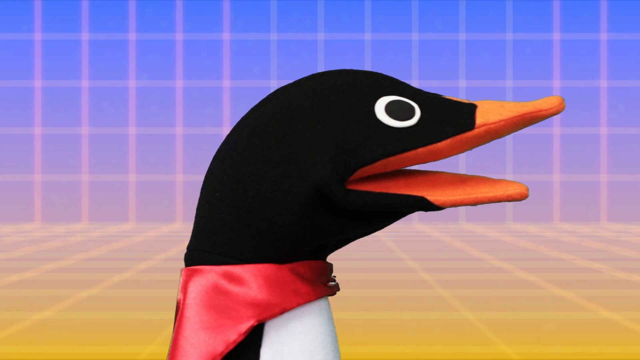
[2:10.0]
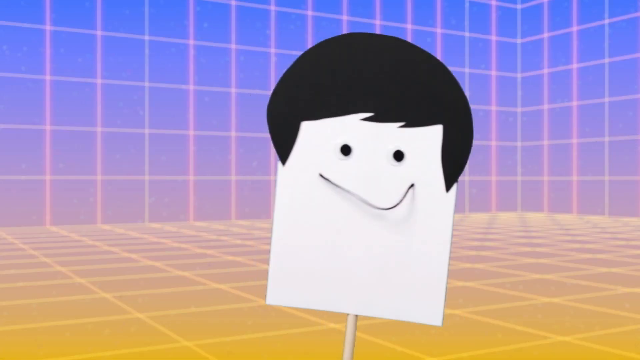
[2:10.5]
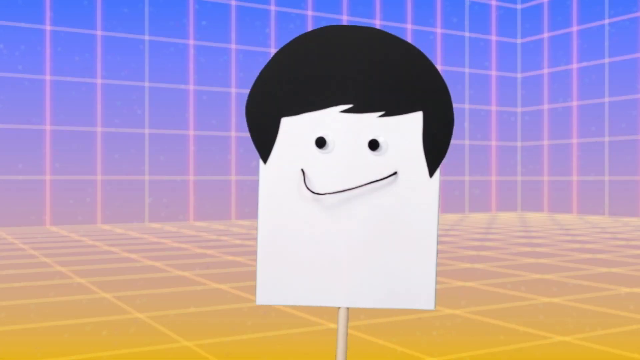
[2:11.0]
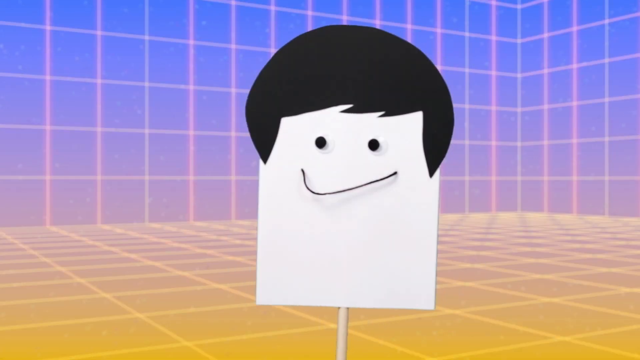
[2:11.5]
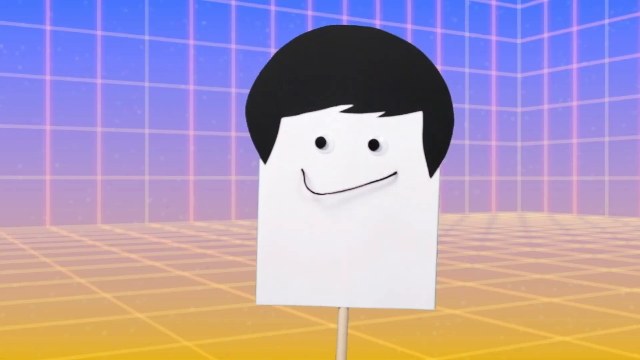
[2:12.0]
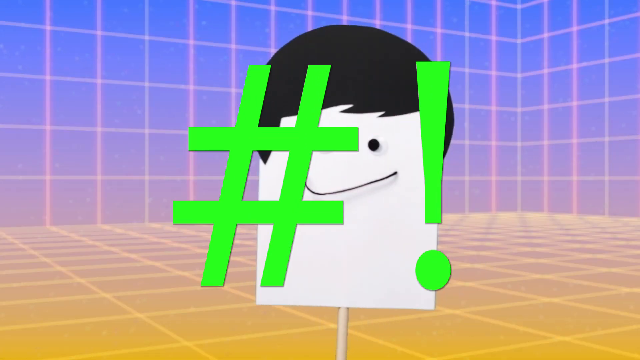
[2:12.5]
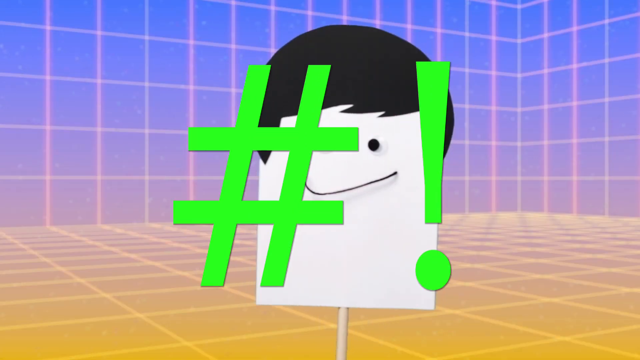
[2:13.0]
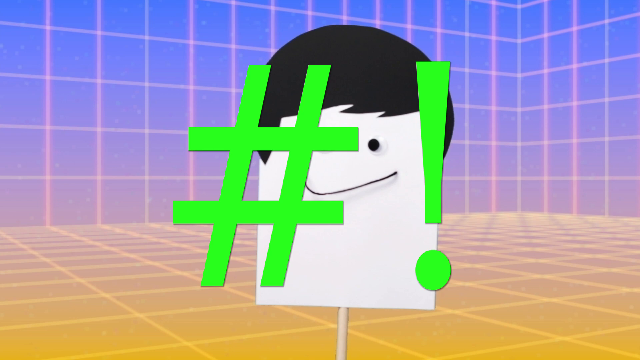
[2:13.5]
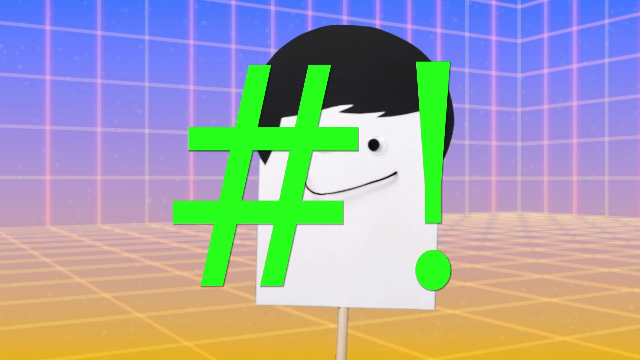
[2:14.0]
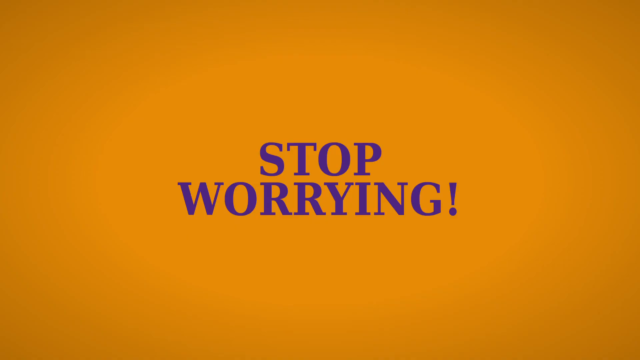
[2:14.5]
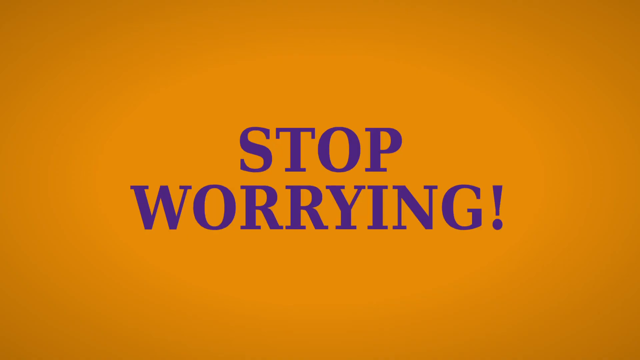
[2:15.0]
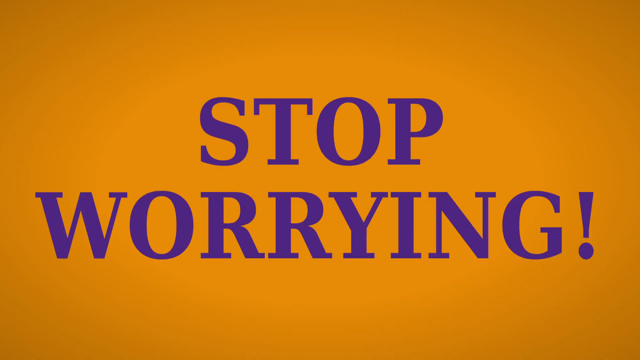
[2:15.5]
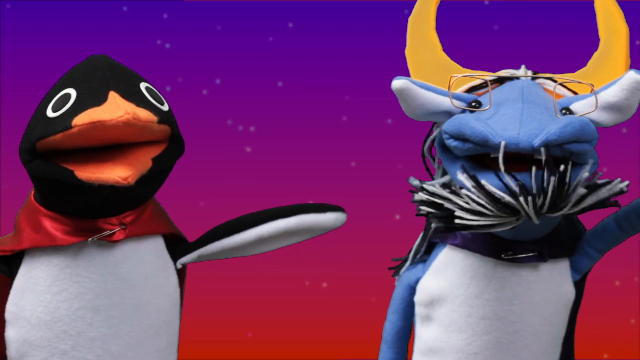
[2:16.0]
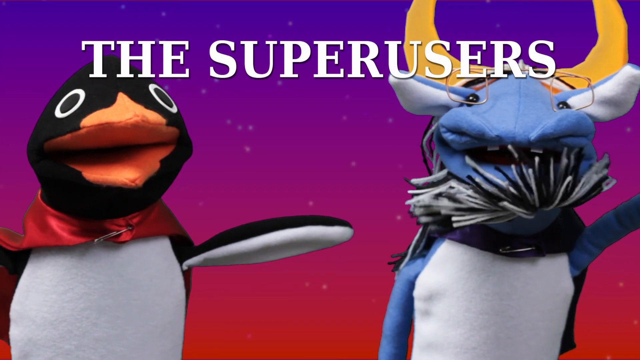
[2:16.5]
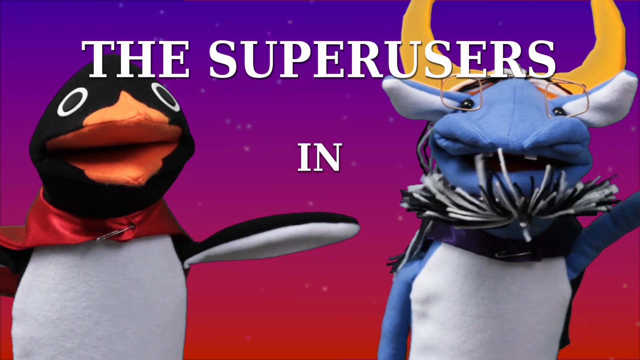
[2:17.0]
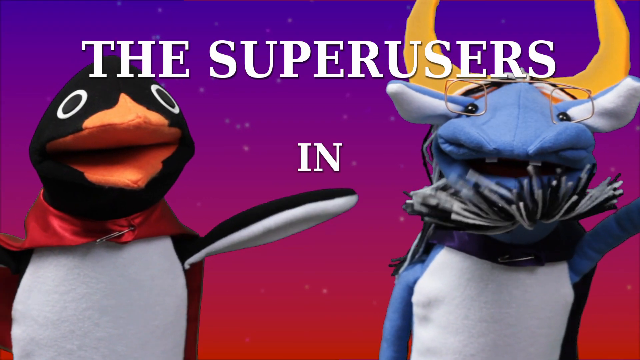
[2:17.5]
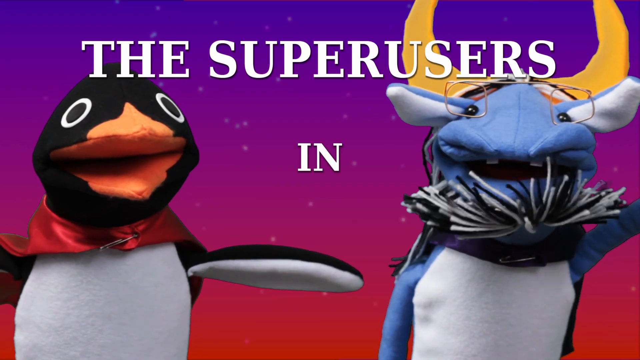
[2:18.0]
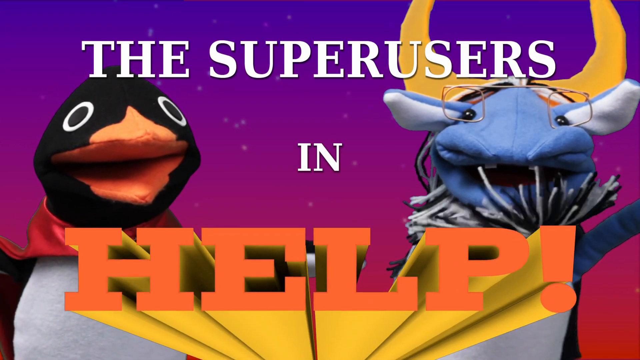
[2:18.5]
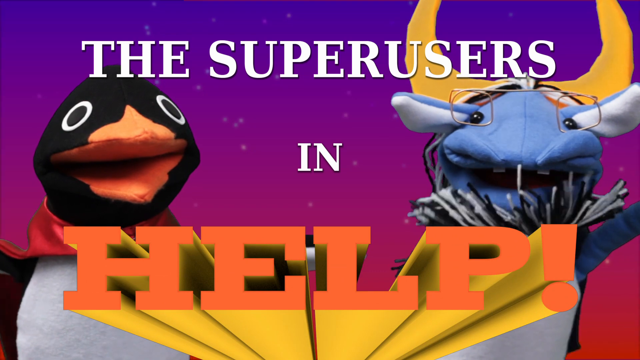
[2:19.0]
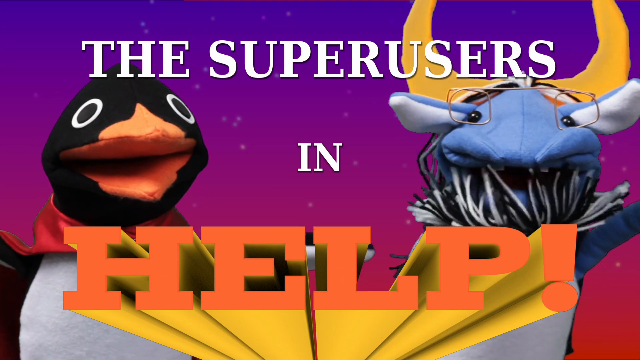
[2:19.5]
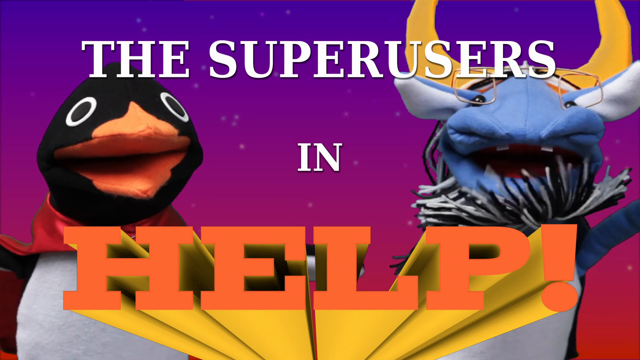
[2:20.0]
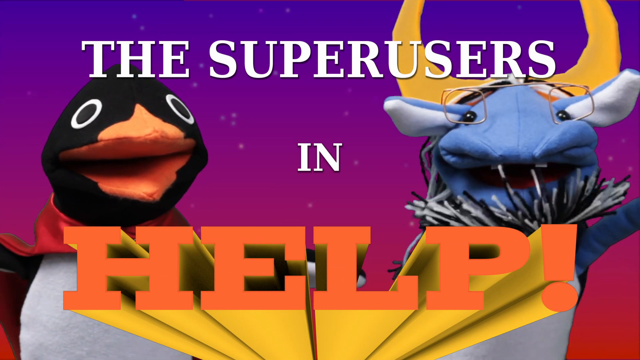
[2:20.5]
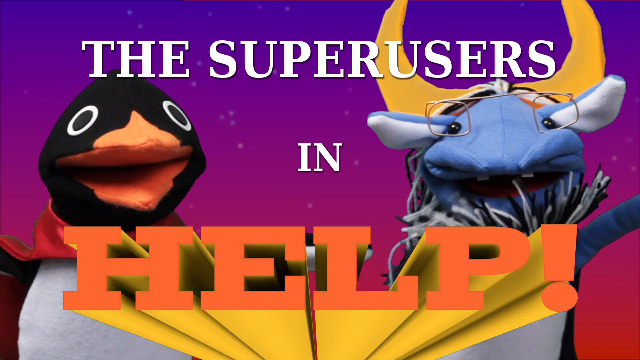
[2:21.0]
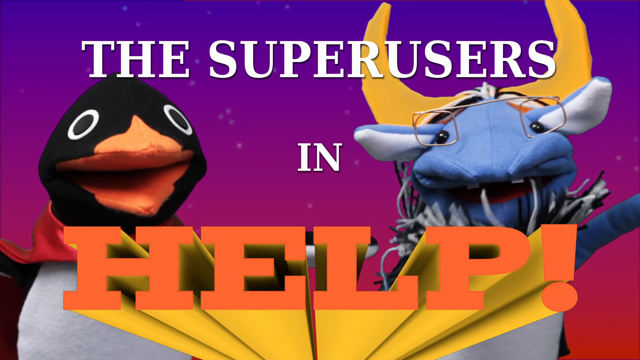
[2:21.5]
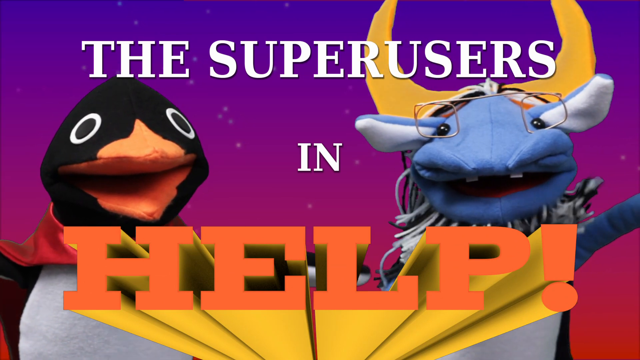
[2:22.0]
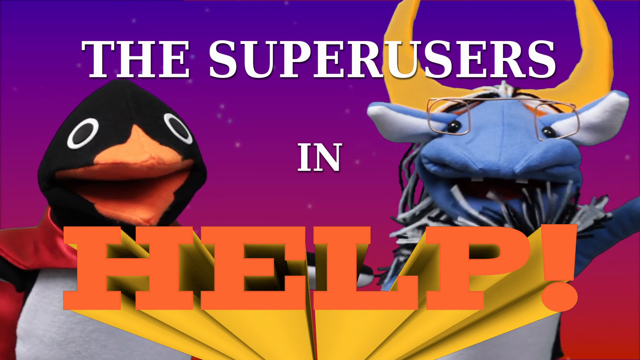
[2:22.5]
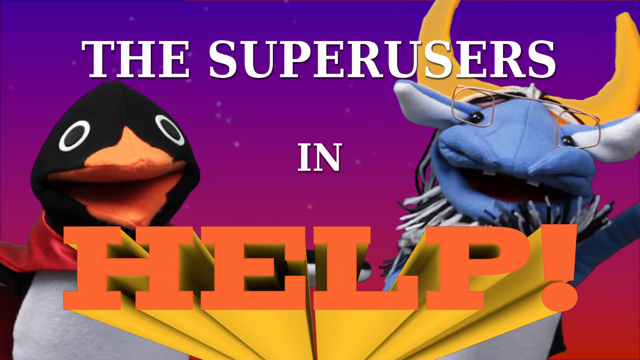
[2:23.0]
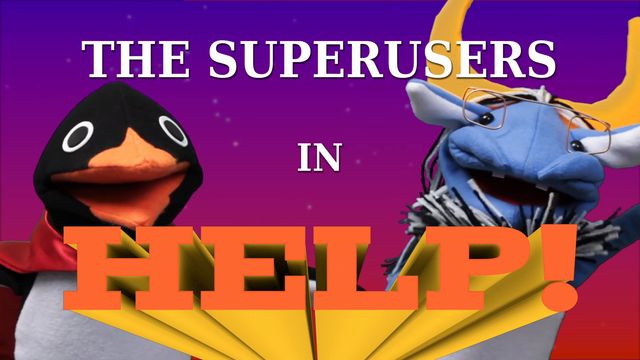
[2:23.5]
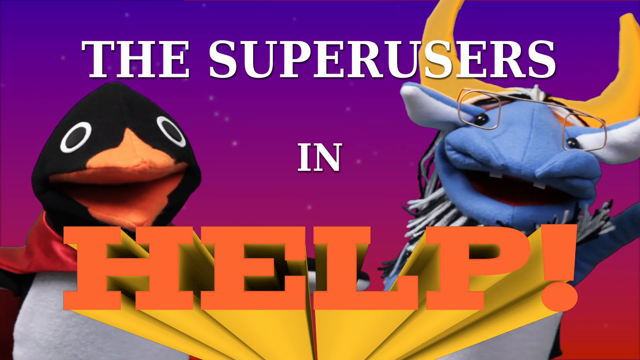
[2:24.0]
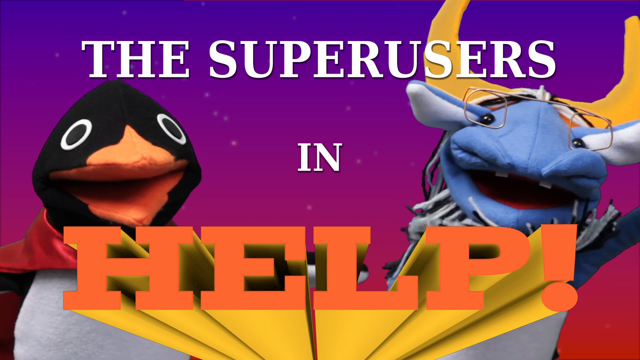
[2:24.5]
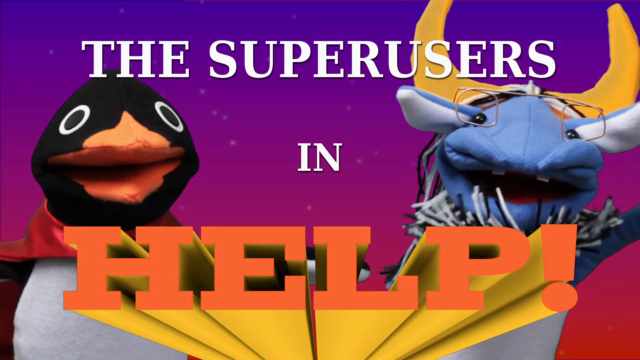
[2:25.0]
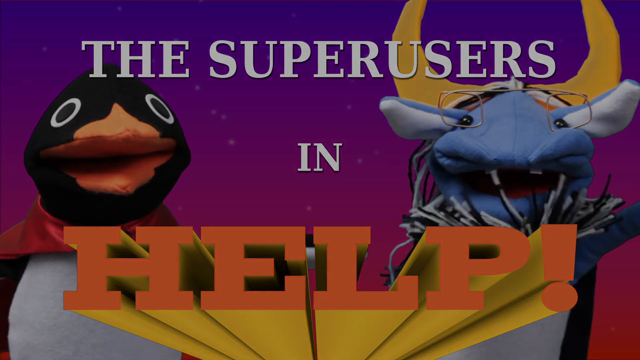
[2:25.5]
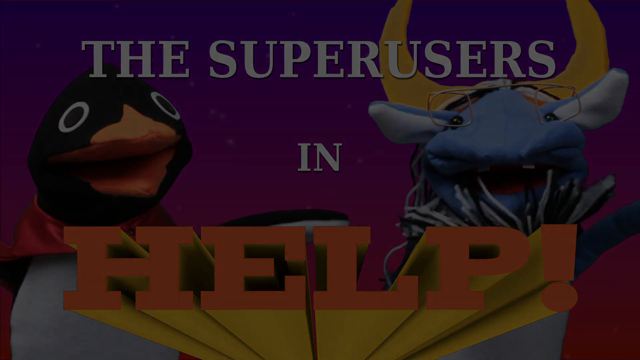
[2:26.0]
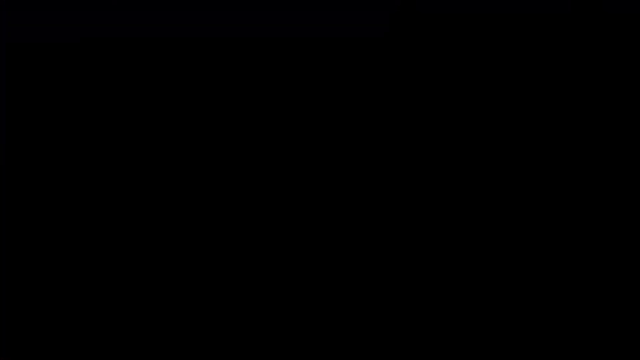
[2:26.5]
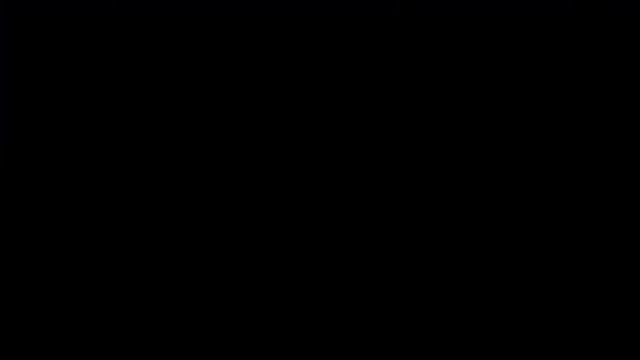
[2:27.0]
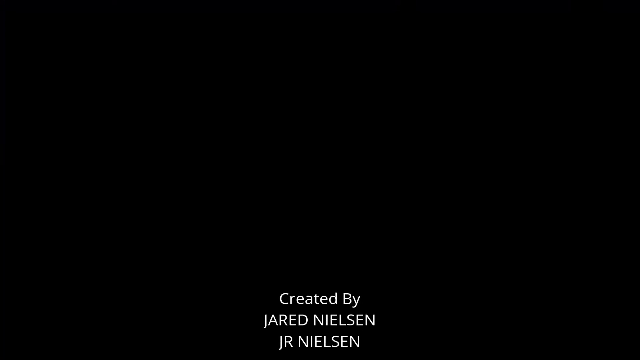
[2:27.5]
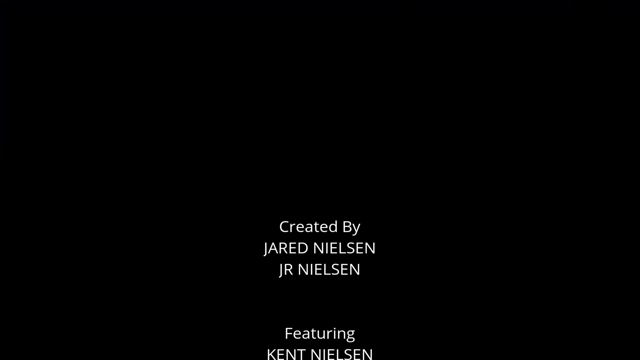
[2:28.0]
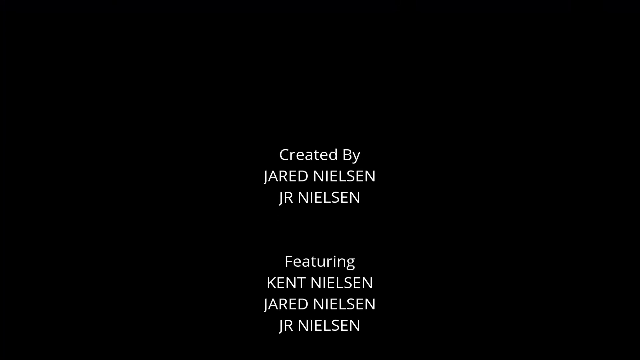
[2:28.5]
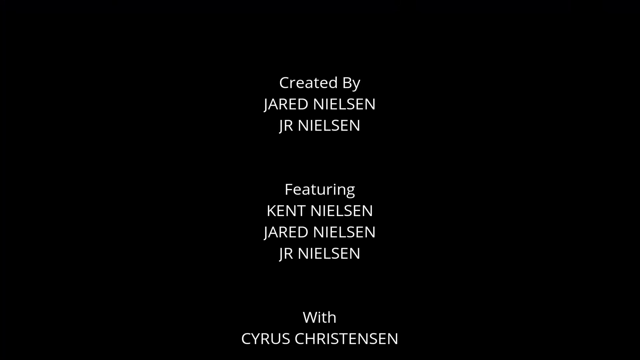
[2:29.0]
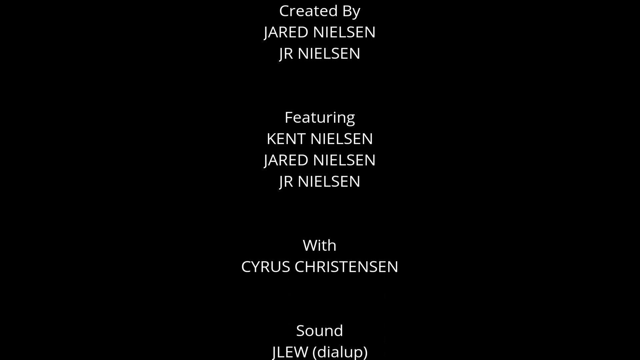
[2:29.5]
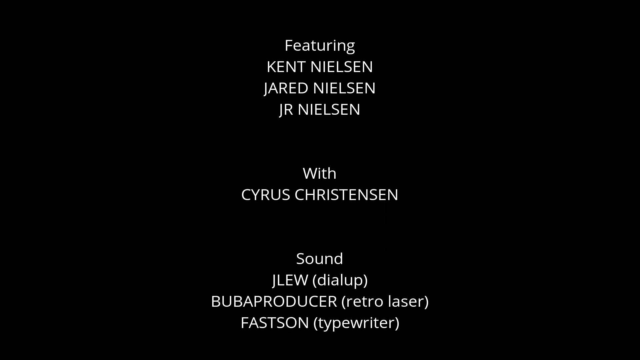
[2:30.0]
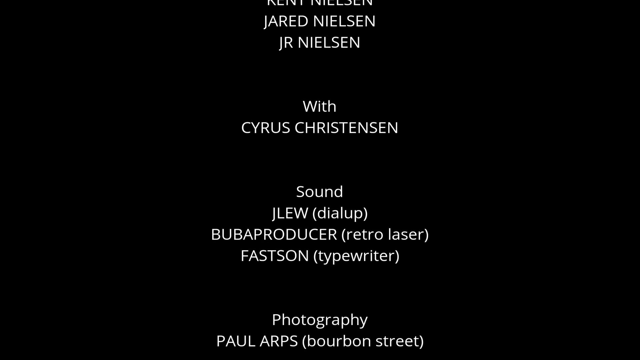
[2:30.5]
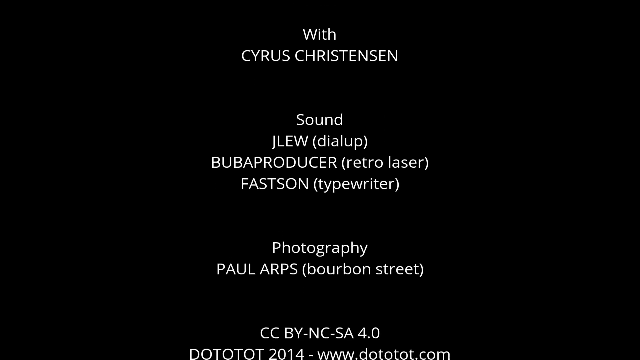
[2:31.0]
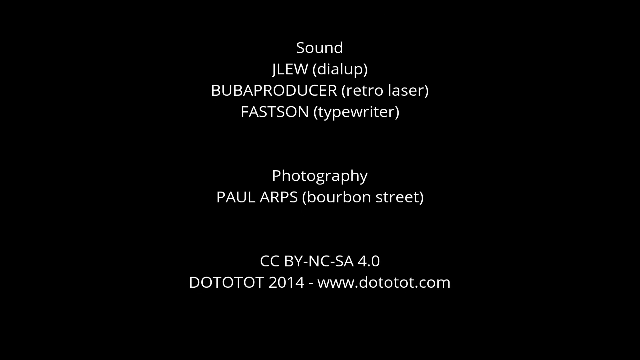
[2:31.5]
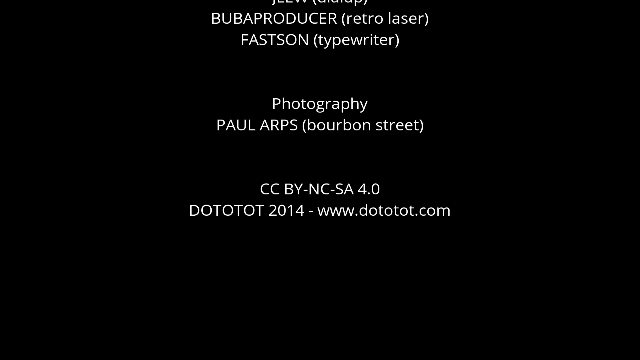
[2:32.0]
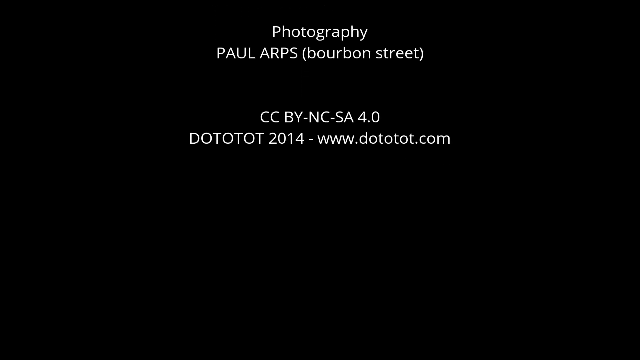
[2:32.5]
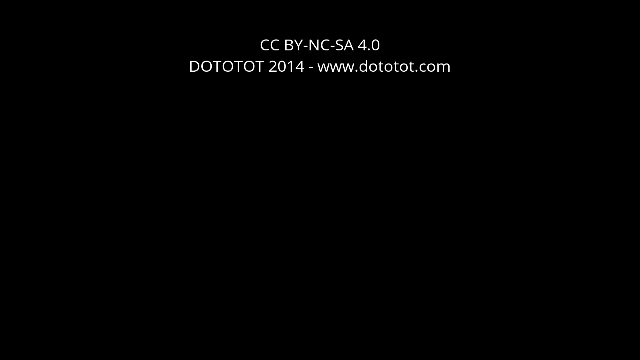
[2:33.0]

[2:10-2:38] The signpost character is in the middle of the room, wagging back and forth. A green colon and a green exclamation point grow bigger and bigger in the middle of the screen. An orange screen follows with purple text reading "stop worrying!", the text growing bigger and bigger. Then the penguin, on the left, and the gnu, on the right, are in front of a purplish, pinkish, hazy night sky background with stars. Text at the top of the screen in a white serif font, all capitals, reads "the super users in help!", with the word "help" in orange and extruded so its yellow sides recede into the distance. The gnu's beard is blowing, apparently from a breeze or a fan.